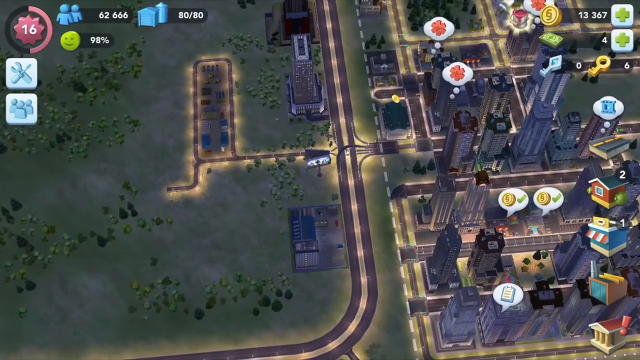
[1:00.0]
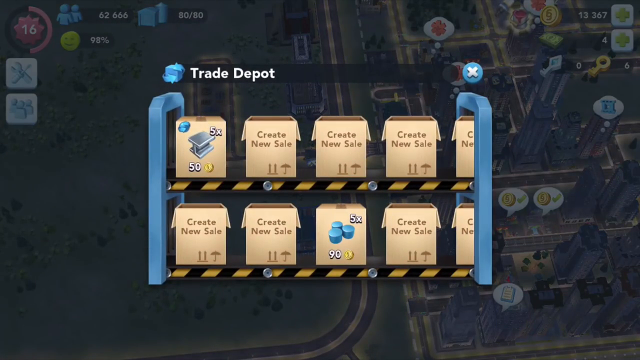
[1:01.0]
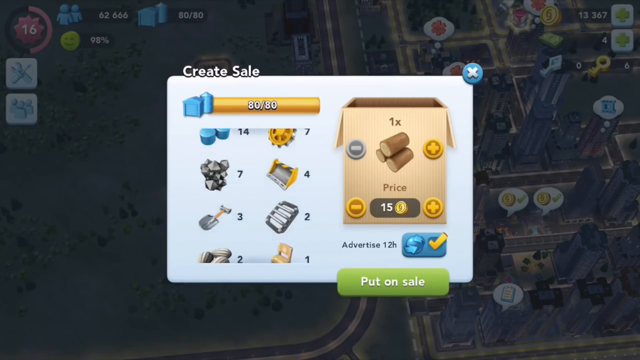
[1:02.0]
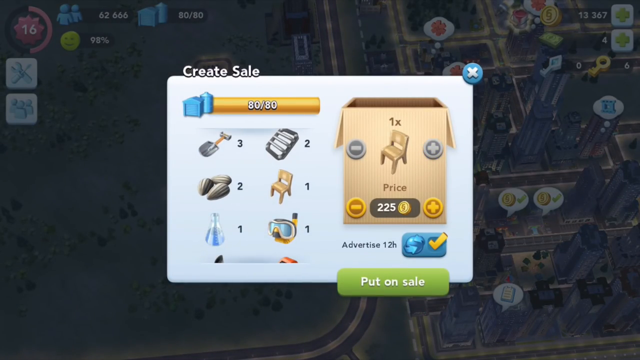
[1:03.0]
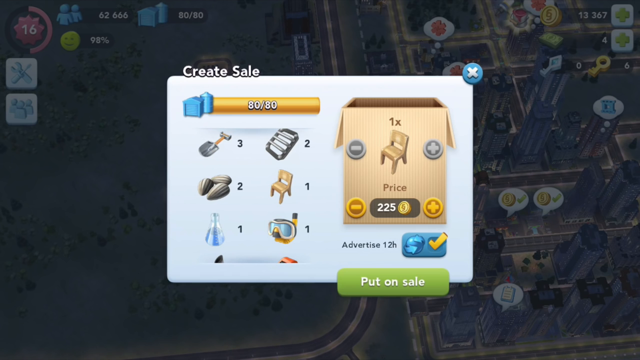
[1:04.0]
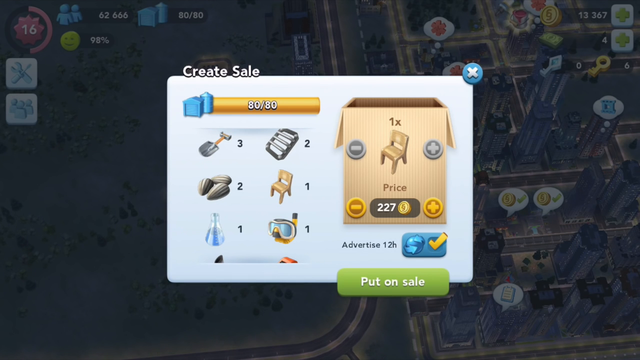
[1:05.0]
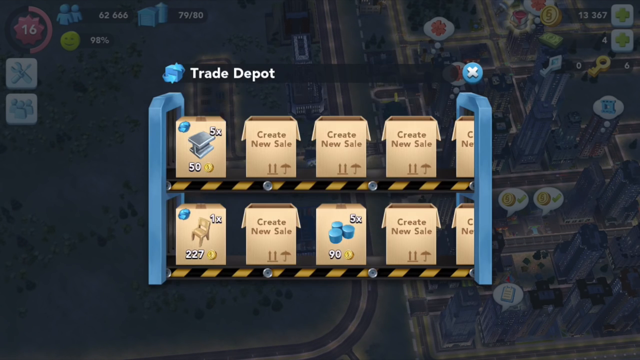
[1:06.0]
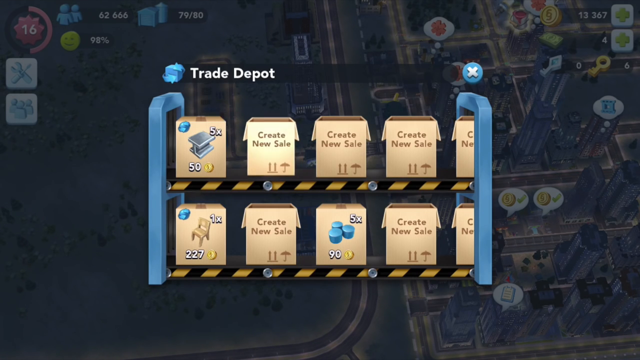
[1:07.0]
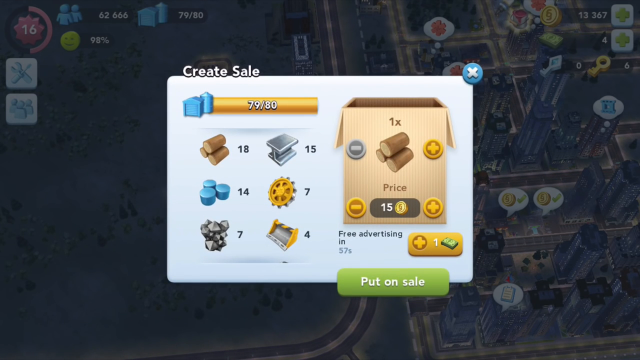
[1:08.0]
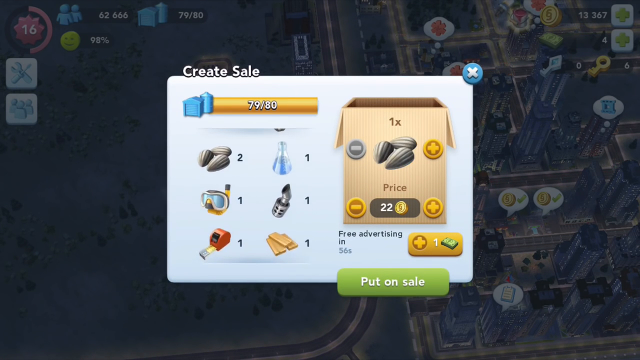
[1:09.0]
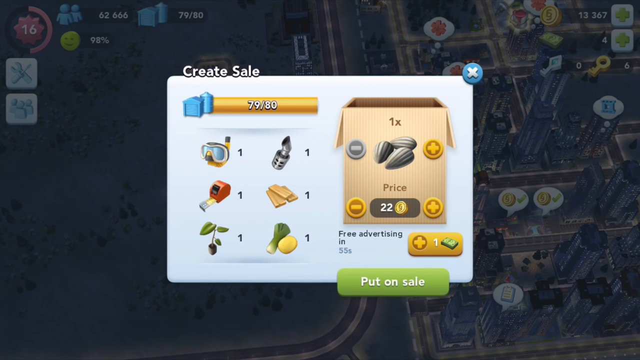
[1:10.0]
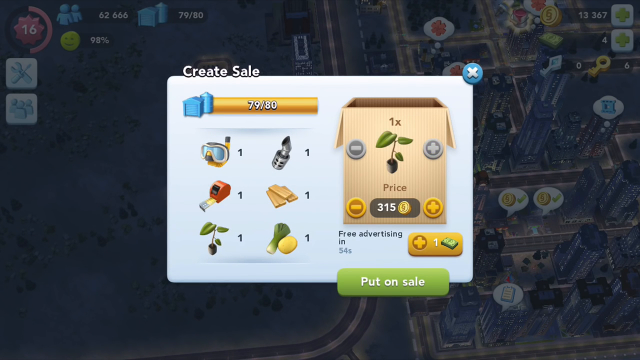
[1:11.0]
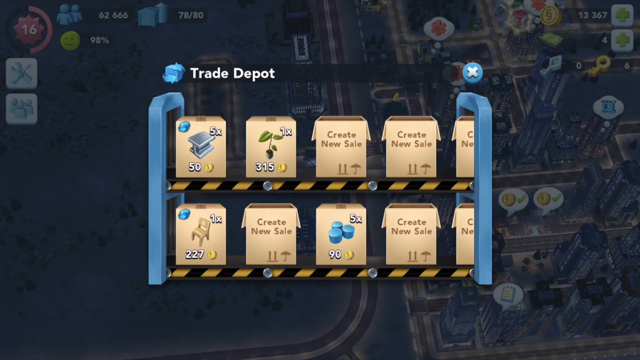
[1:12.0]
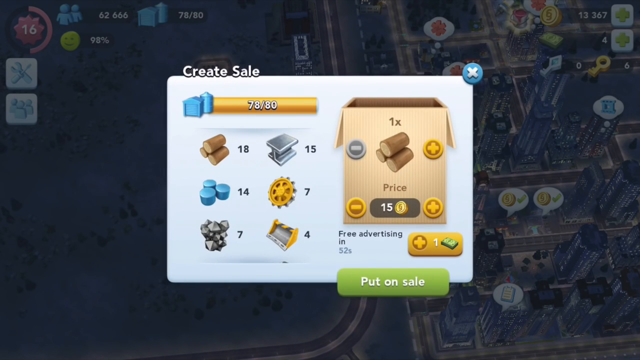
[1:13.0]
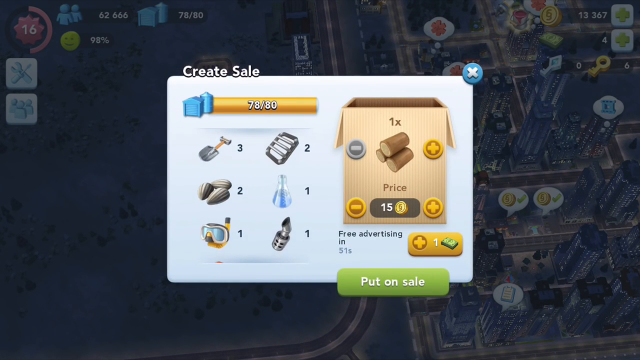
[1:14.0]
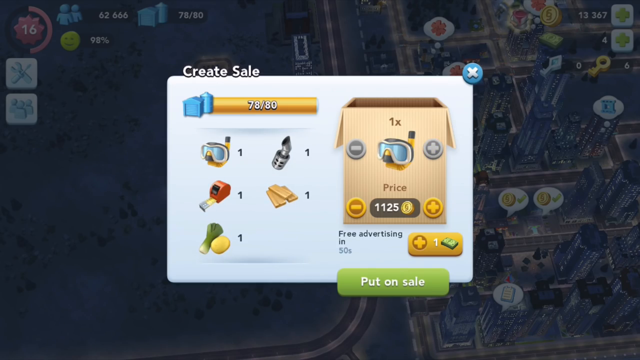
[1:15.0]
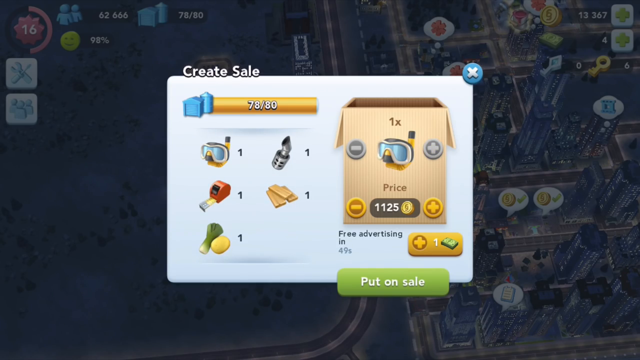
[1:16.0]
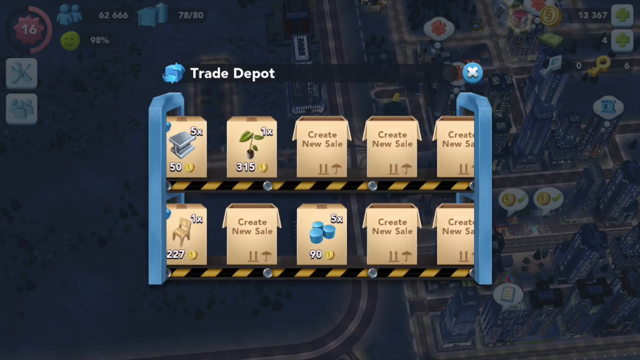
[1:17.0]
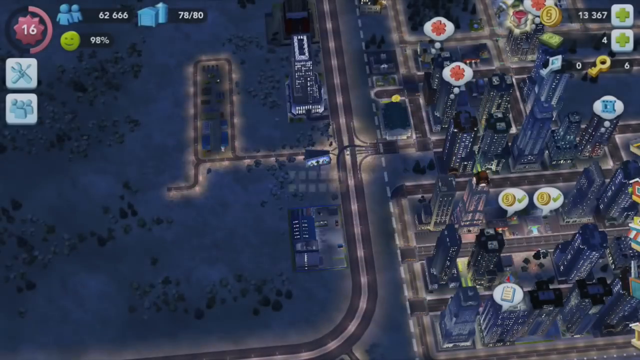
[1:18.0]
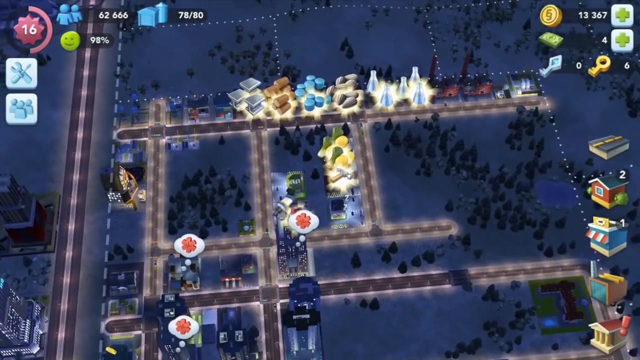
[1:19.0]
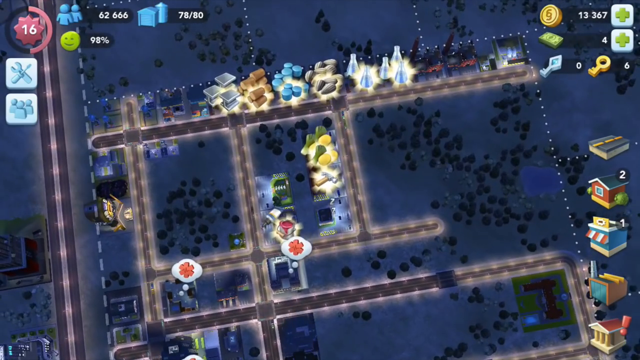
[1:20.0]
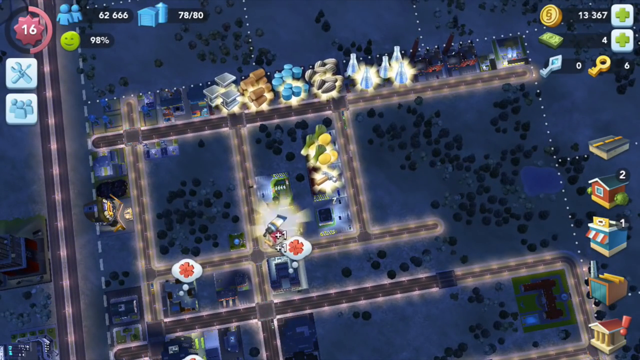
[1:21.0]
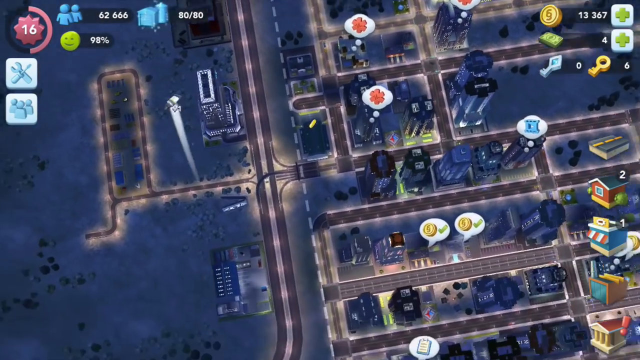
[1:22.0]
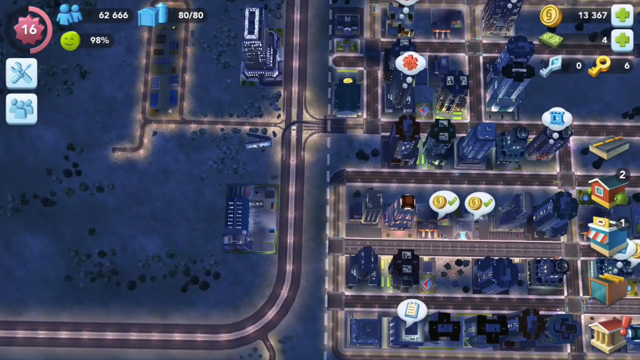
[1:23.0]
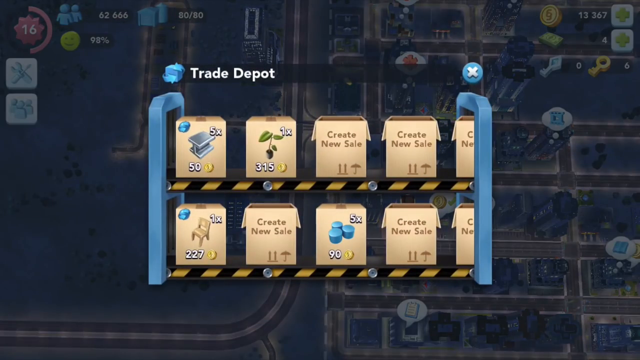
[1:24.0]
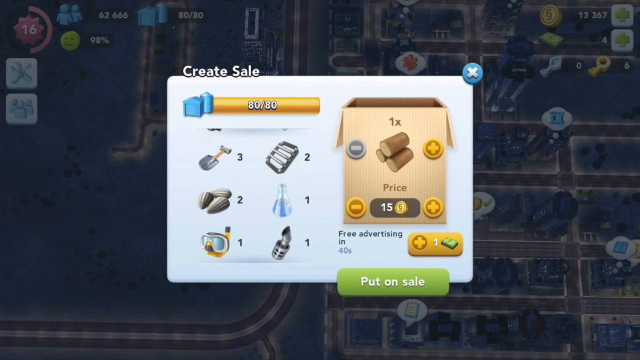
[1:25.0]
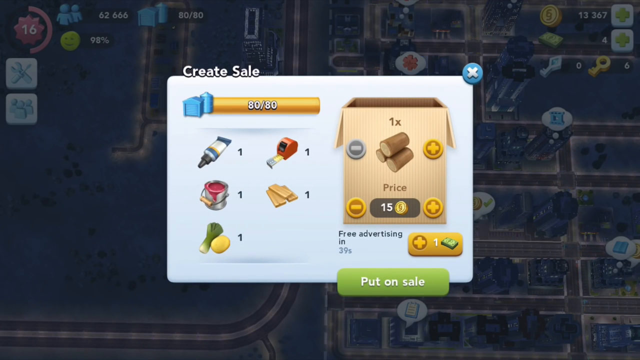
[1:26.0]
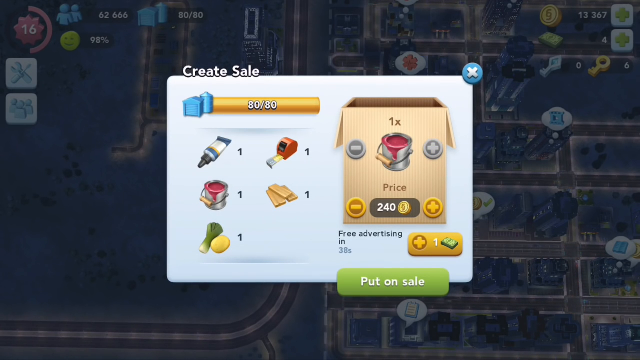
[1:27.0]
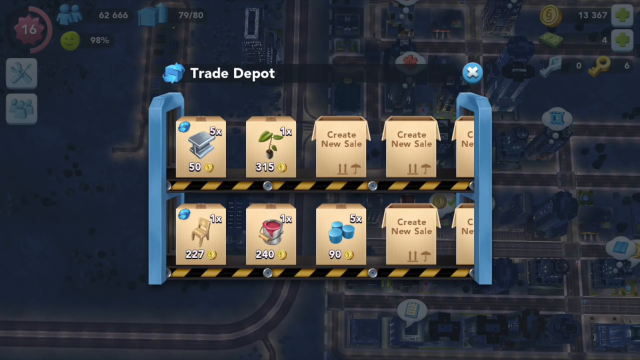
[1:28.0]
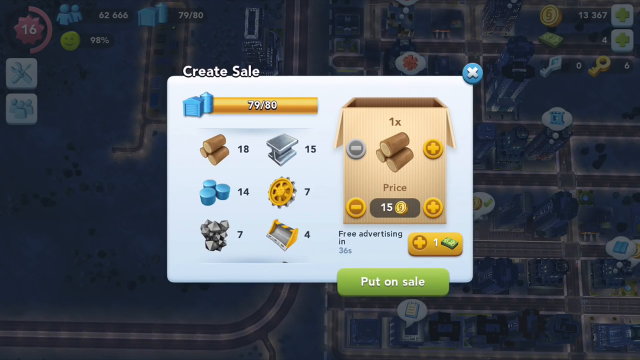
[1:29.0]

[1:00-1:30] An overhead view of the city shows a section on the left-hand outskirts that seems more forest-like, or just green. The trade depot window is brought up, apparently followed right afterward by create sale, possibly with a selection made in it. Underneath create sale, the player scrolls through items to select, clicks the check mark, and goes back out to do the same thing again, this time selecting the plant and then what seems possibly to be goggles. After the screen closes, the camera pans around various areas, a few clicks are made, and some resources go to the top of the screen. The trade depot sign is brought up and create sale appears again, showing various items such as chairs, shovels, and what could be underwater goggles. A price is set underneath, followed by something like "advertise" with a number, and then "put on sale".